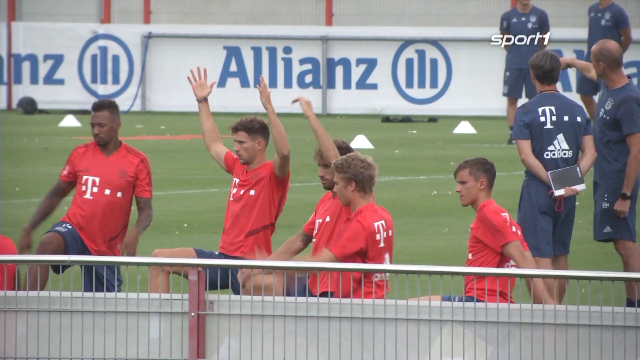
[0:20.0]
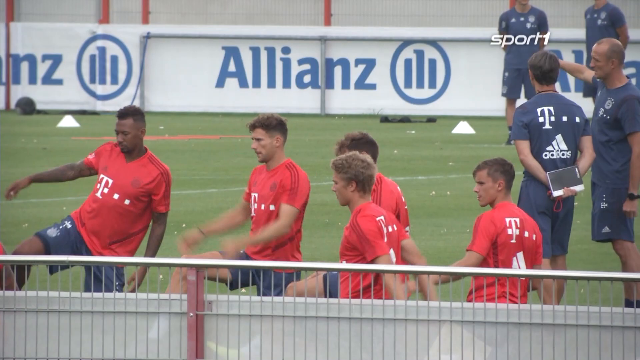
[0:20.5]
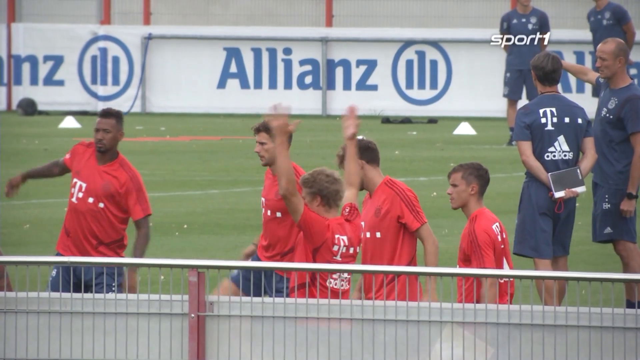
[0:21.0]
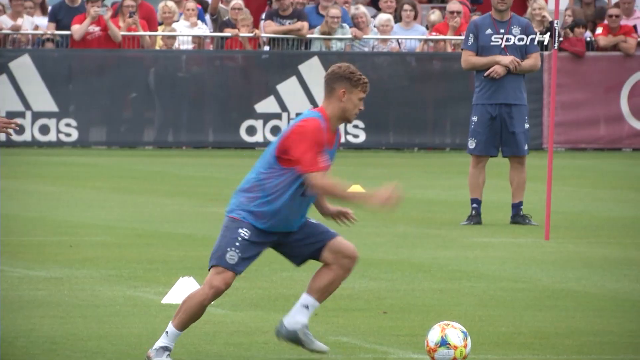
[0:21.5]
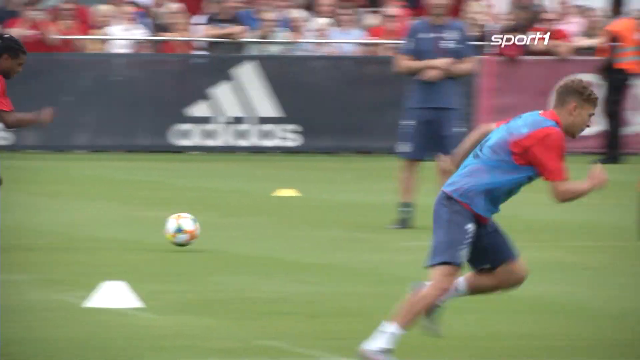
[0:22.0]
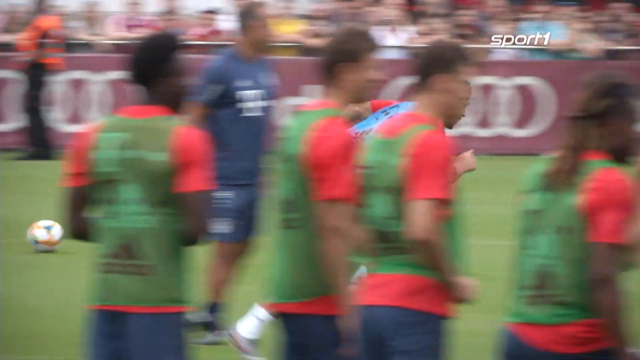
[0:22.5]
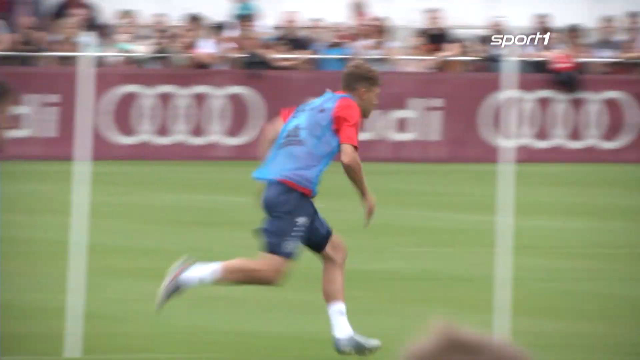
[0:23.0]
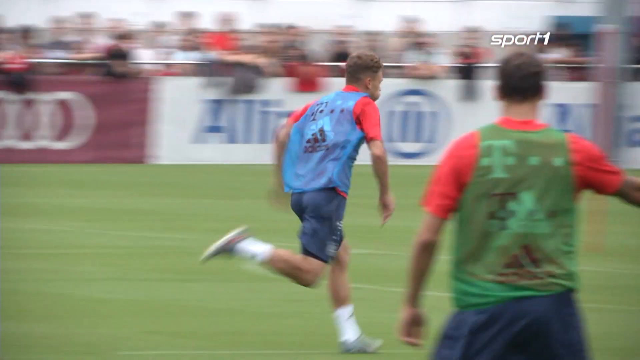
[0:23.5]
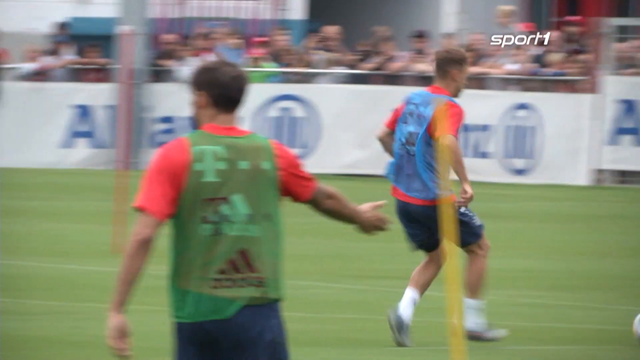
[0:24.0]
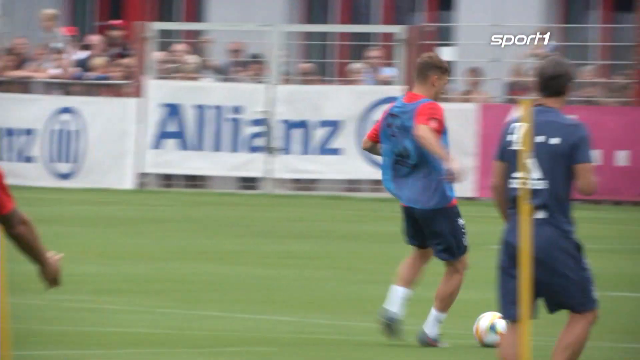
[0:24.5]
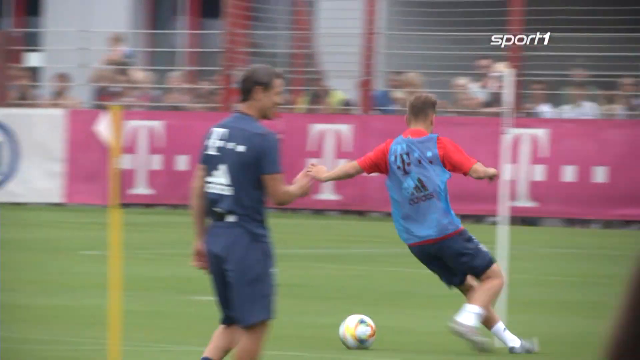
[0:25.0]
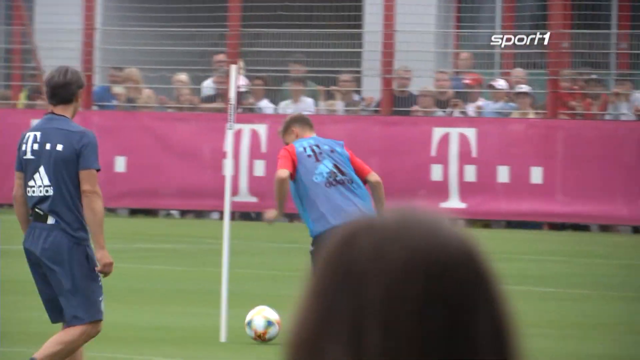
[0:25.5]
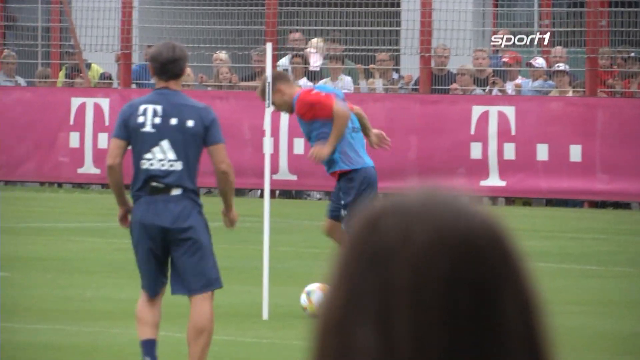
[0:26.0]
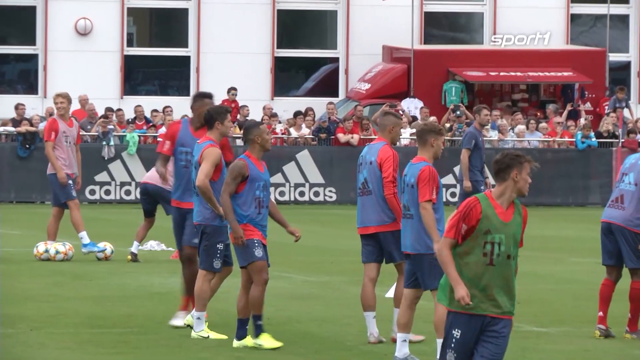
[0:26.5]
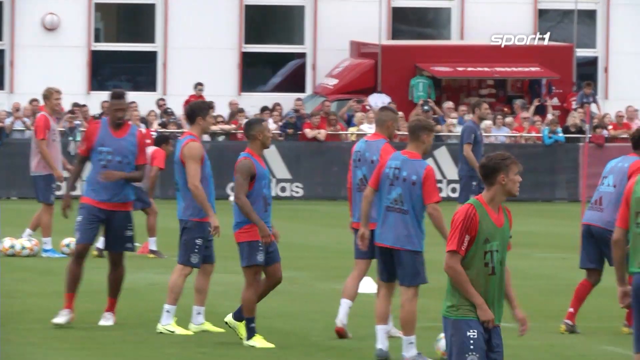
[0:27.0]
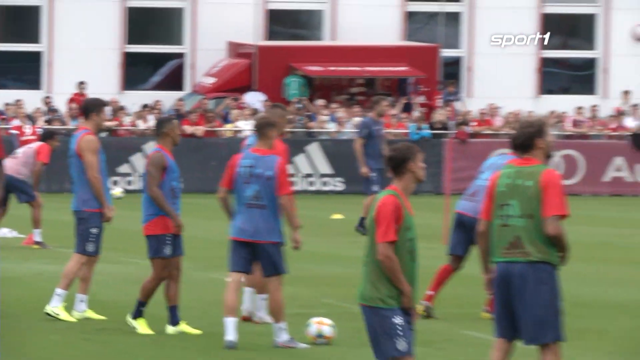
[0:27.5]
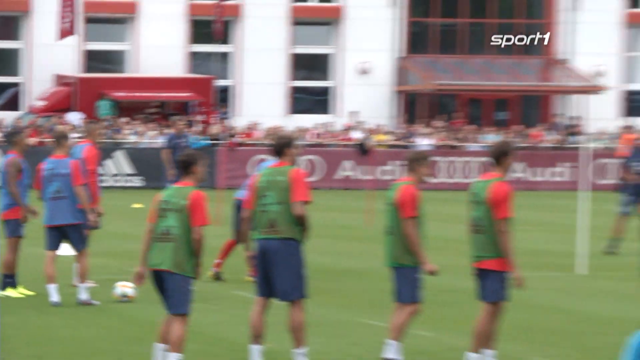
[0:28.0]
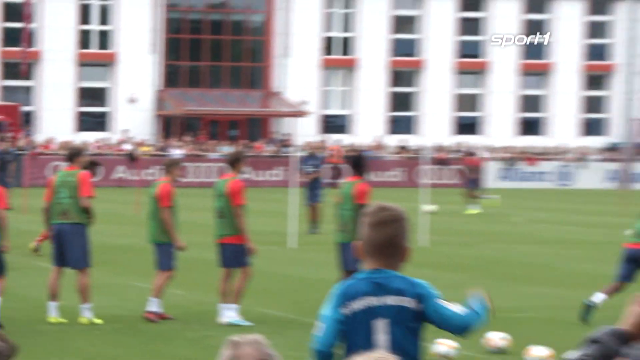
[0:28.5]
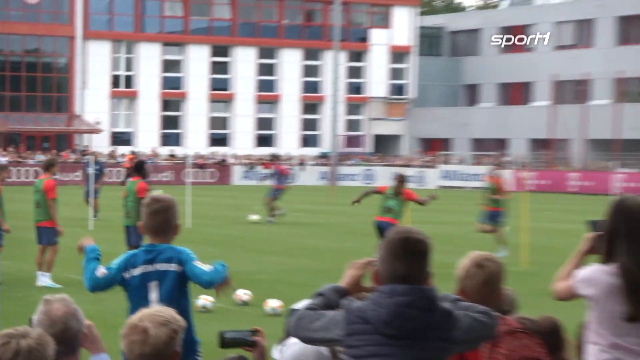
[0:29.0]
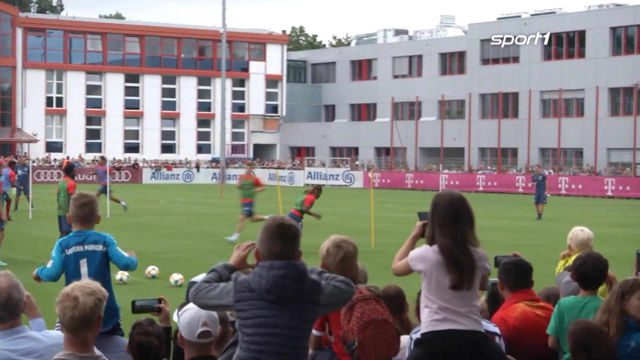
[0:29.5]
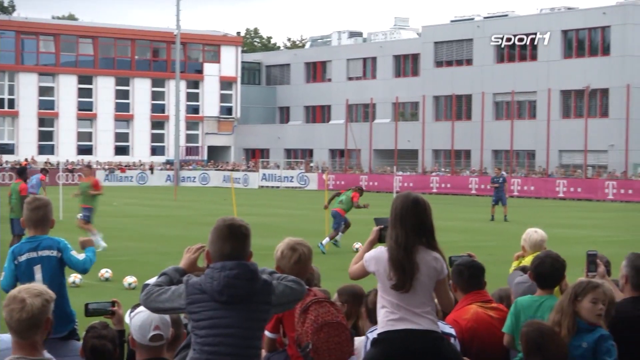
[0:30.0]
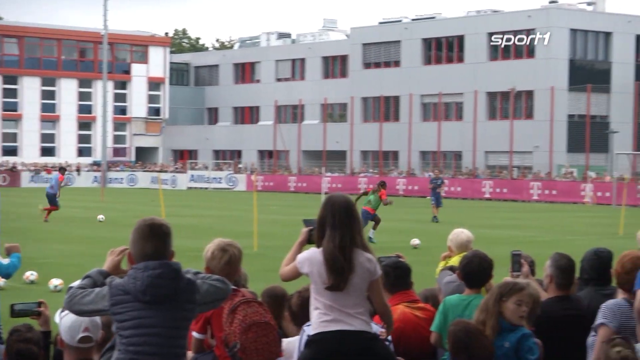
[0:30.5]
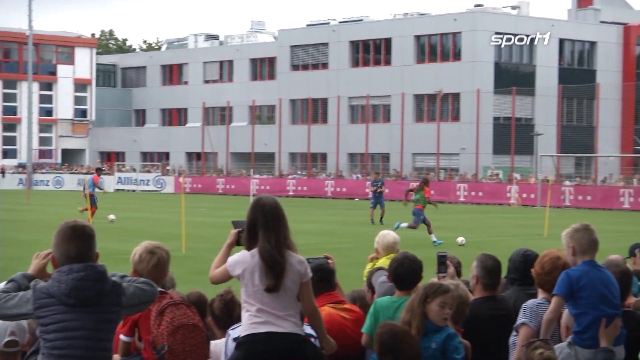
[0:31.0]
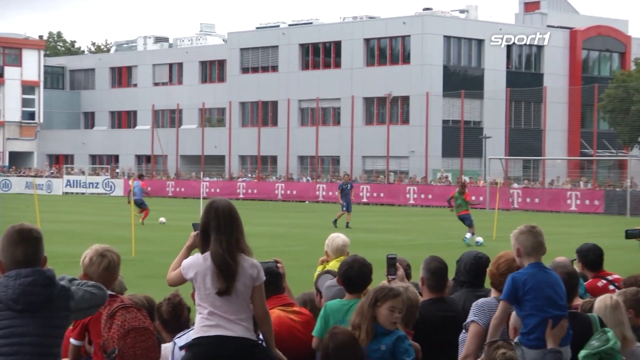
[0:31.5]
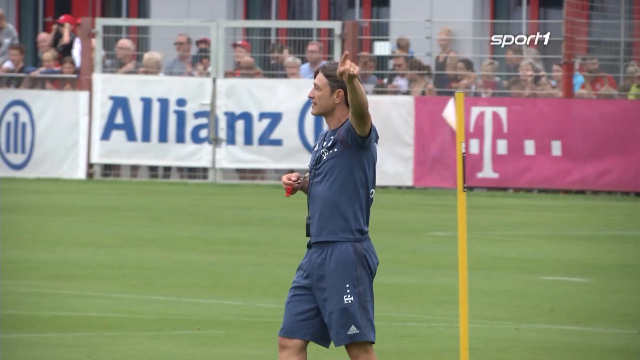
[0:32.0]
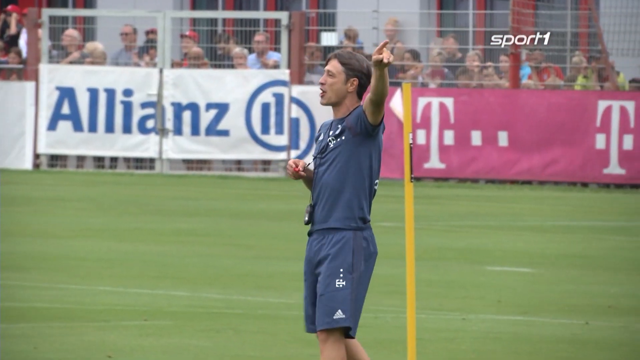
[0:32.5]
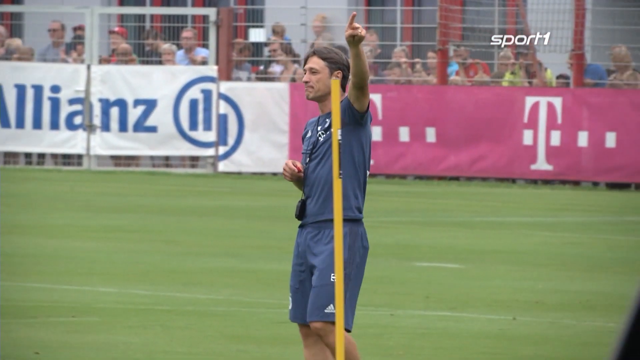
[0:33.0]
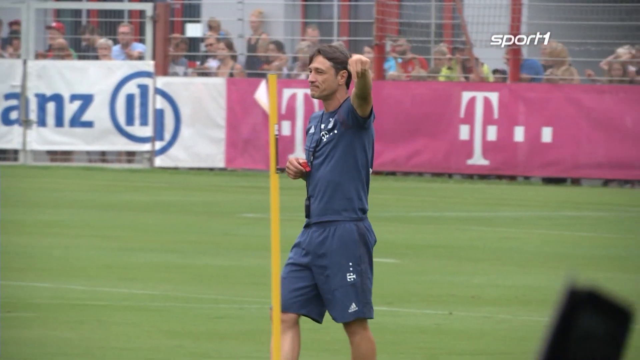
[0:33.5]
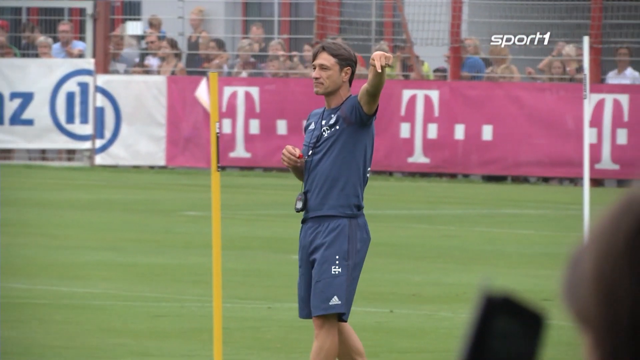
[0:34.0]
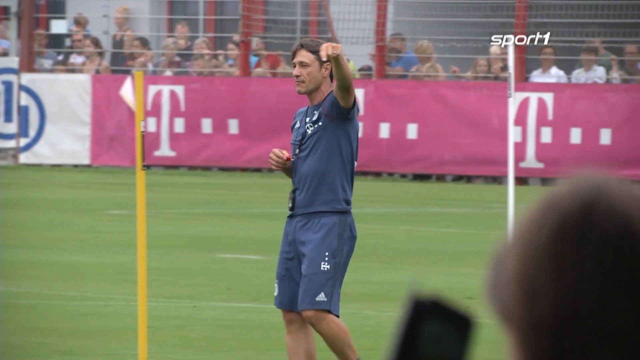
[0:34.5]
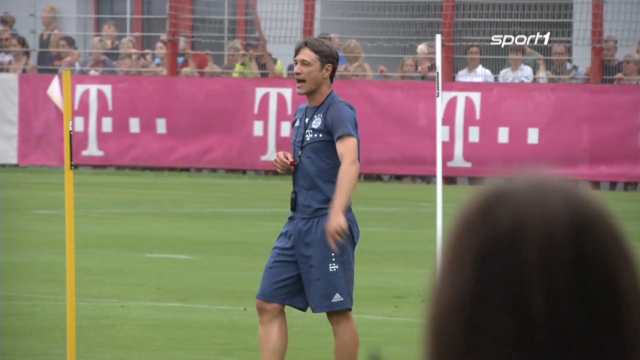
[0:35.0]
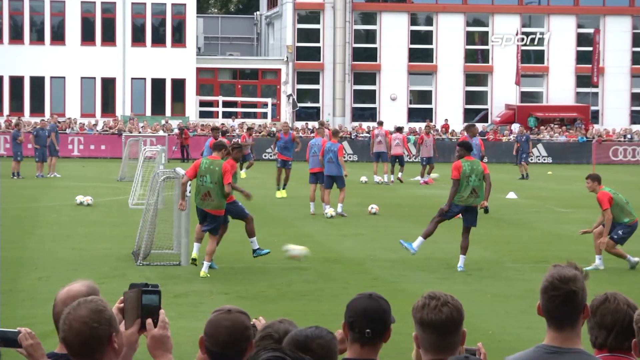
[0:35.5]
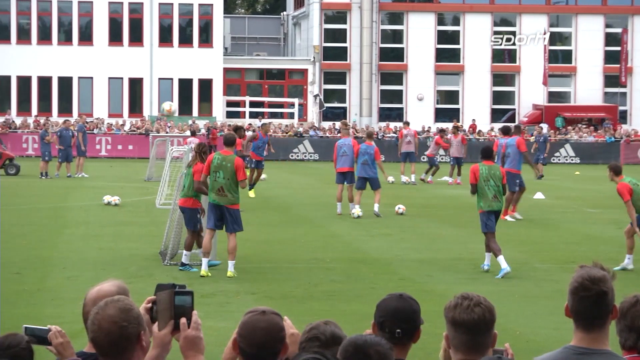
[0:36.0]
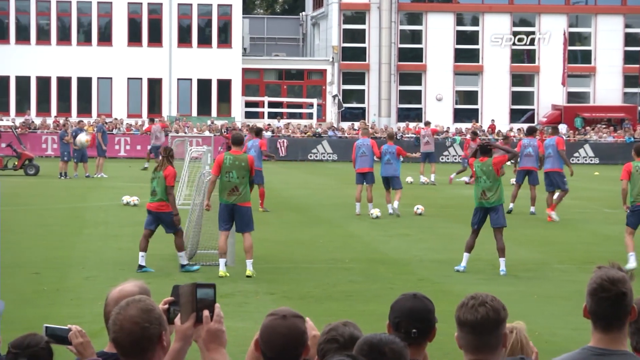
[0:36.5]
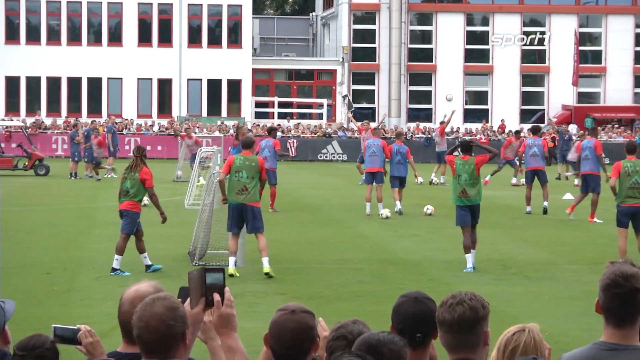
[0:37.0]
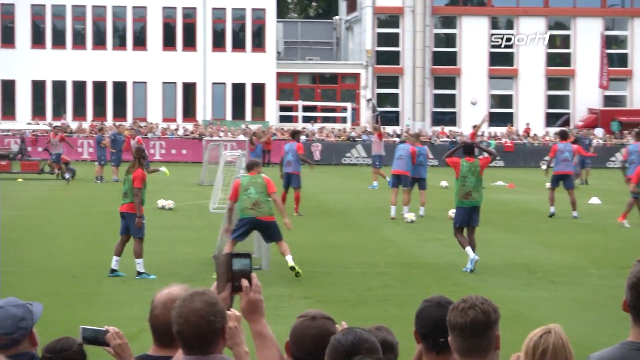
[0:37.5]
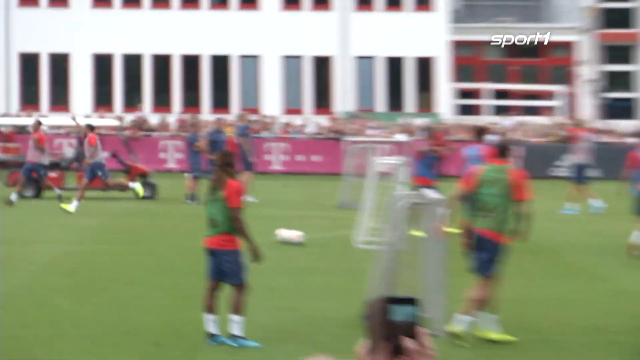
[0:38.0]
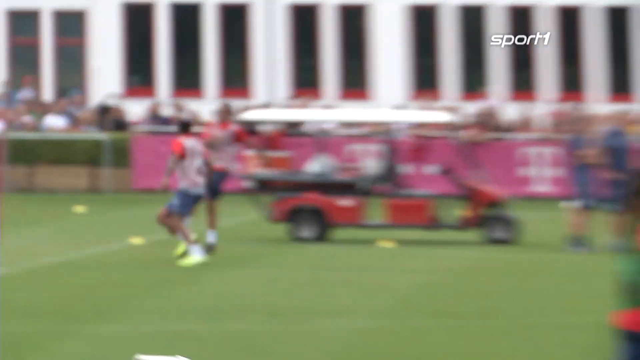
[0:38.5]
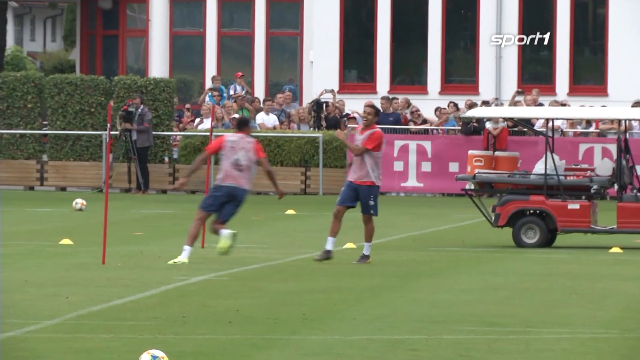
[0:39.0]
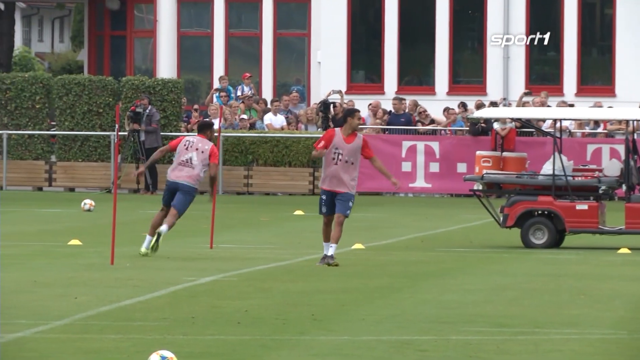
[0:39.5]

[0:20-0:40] One player, apparently in a blue penny, sprints with the ball. The players seem to be in lines doing a drill where they race against another player. A coach with a whistle, apparently, walks backwards giving instructions and points with his left arm. The players sprint, receive a pass after about maybe 10 yards, and dribble around another flag. They appear to be racing another group, moving left to right, then pass the ball back to the next person, who runs and does the drill. Some players go around the cone while others, in blue pennies and green pennies, wait for the pass; the players with green pennies have red shirts and blue shorts. There are little mini nets on the field and a training golf cart type of vehicle. Players raise their arms up. The coaches, with tucked-in shirts, hold what looks like a tablet behind their backs. The coach has short brown hair. The ball gets passed, and a player with his hands on his head looks exasperated.